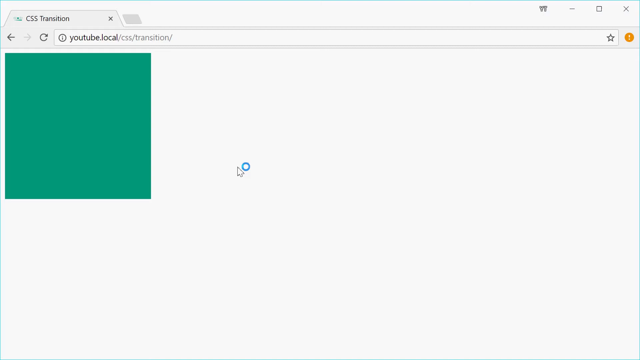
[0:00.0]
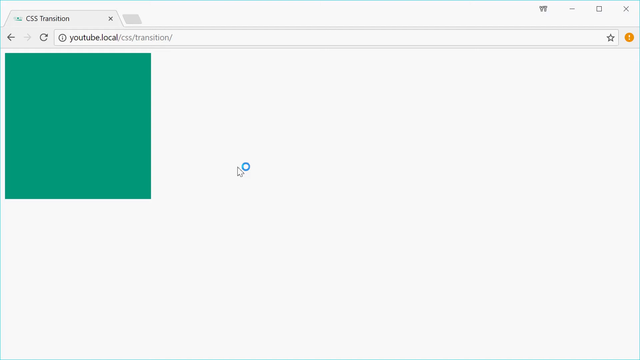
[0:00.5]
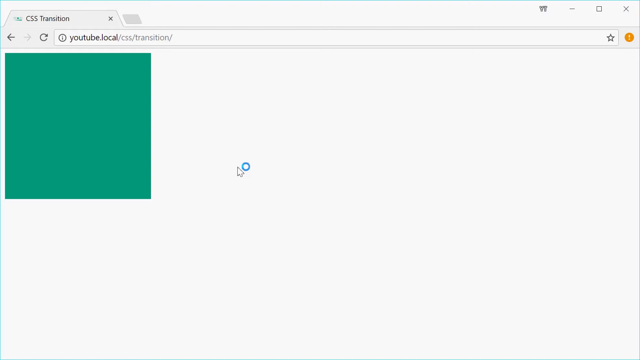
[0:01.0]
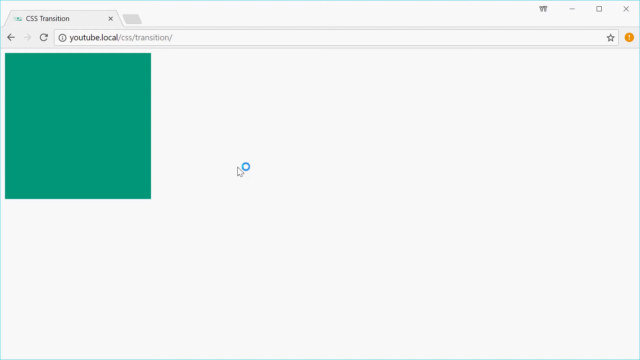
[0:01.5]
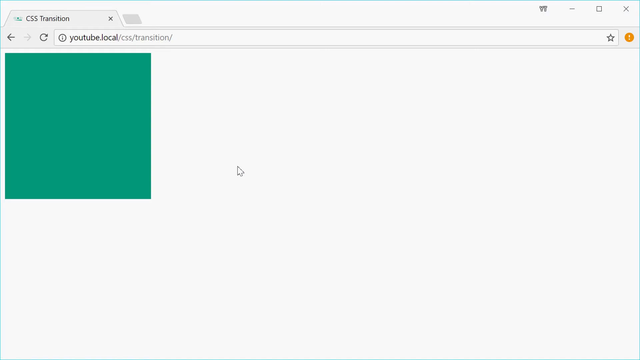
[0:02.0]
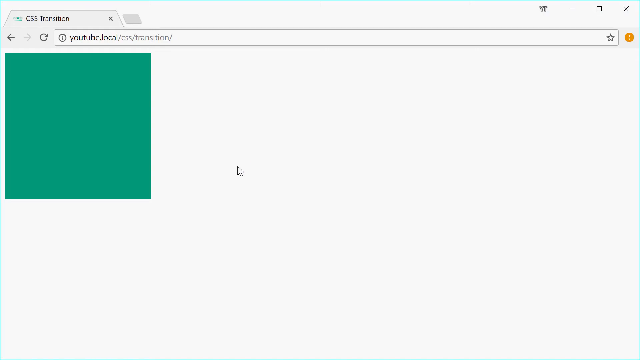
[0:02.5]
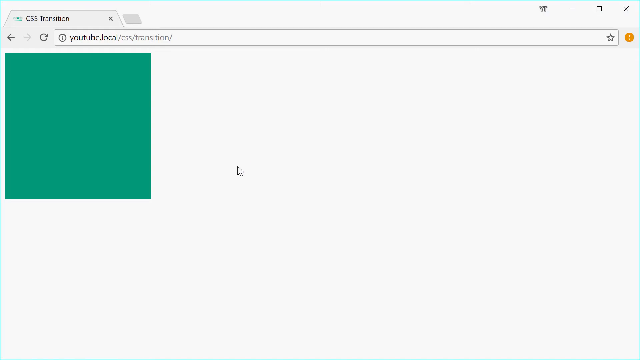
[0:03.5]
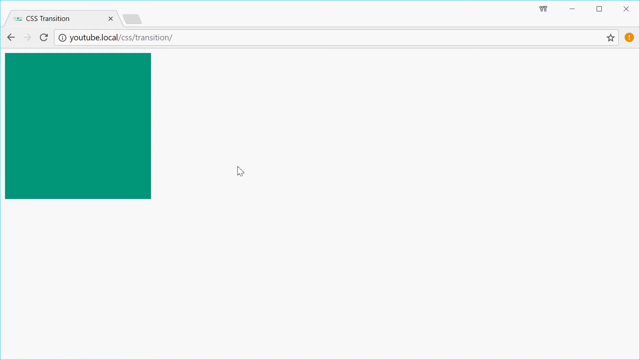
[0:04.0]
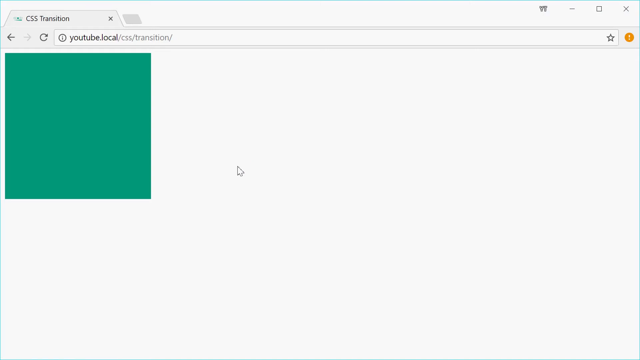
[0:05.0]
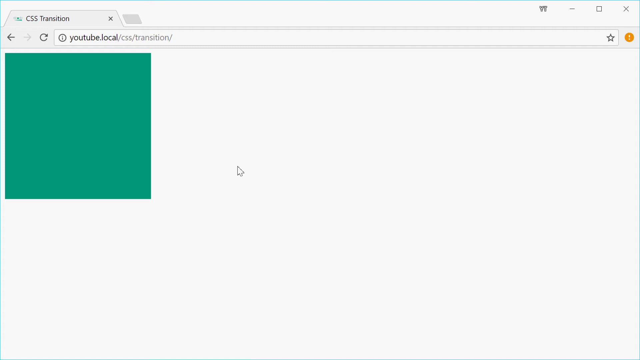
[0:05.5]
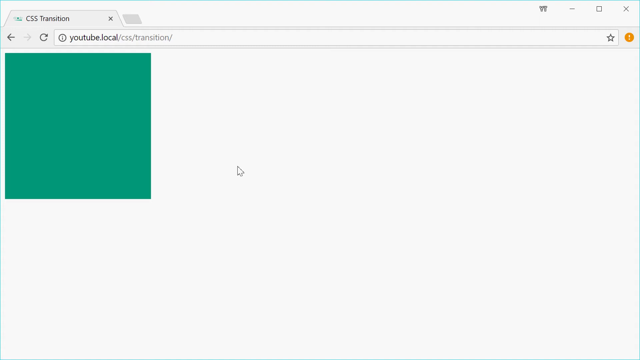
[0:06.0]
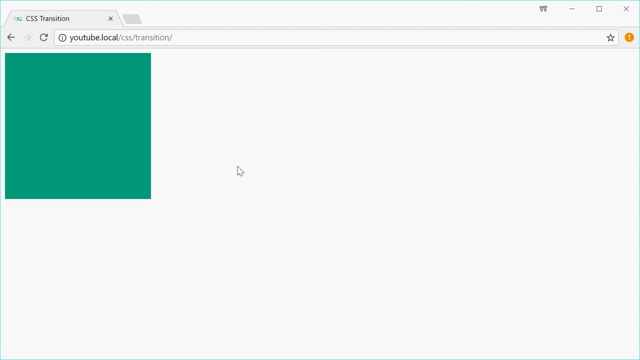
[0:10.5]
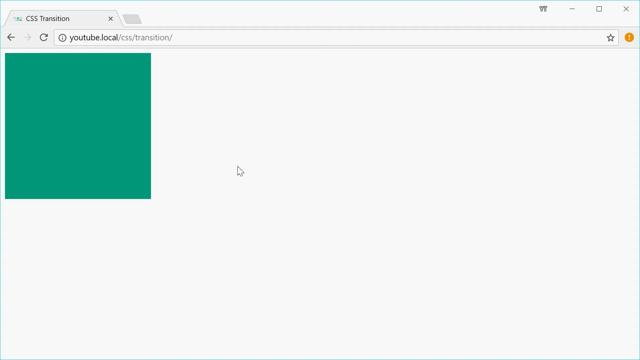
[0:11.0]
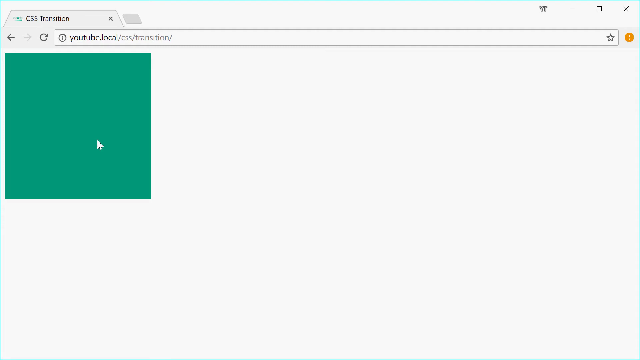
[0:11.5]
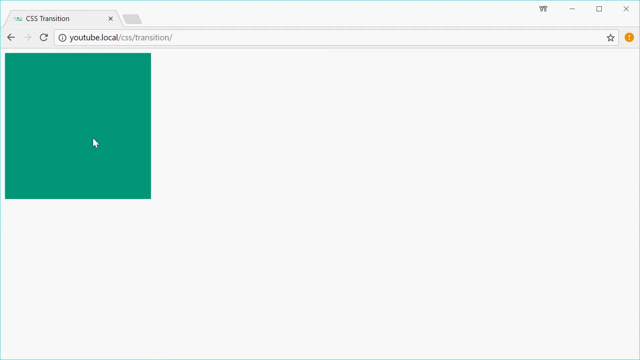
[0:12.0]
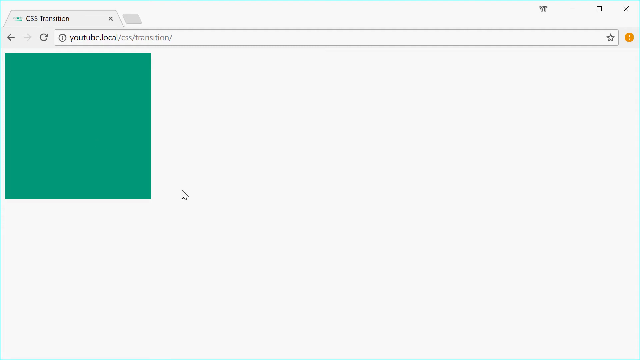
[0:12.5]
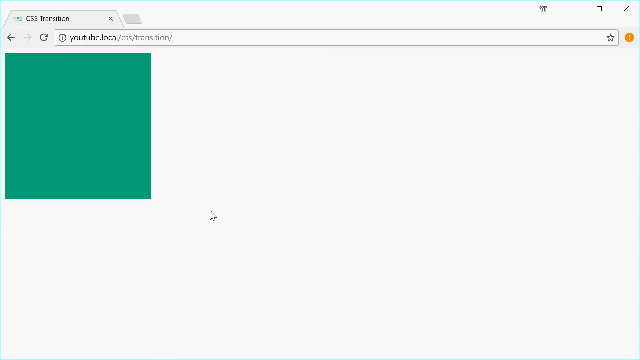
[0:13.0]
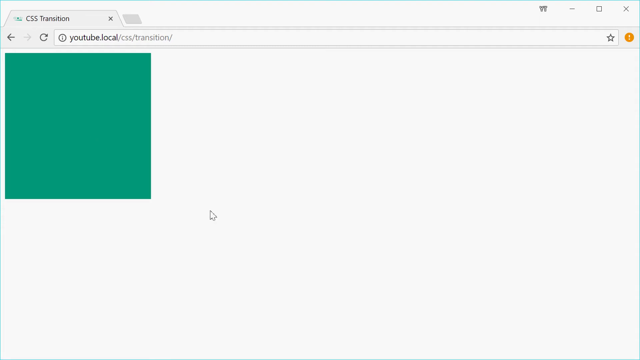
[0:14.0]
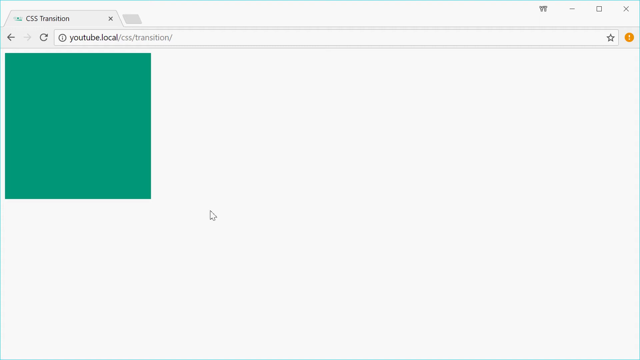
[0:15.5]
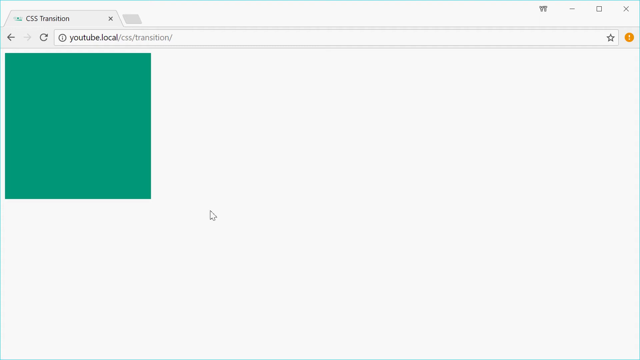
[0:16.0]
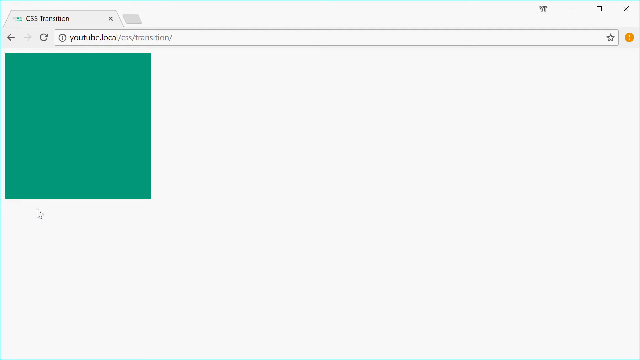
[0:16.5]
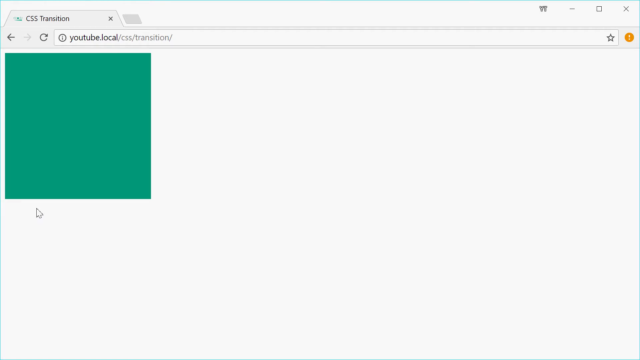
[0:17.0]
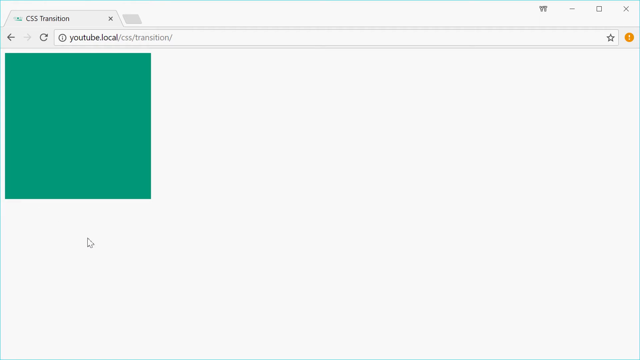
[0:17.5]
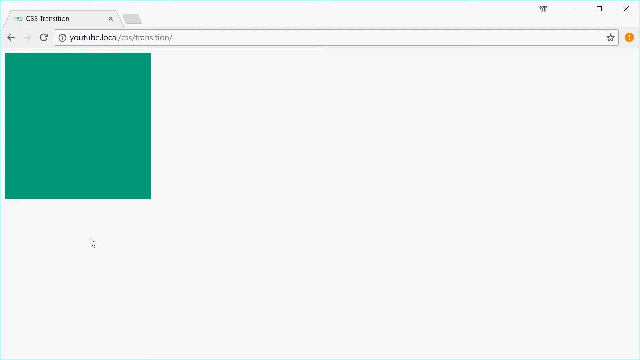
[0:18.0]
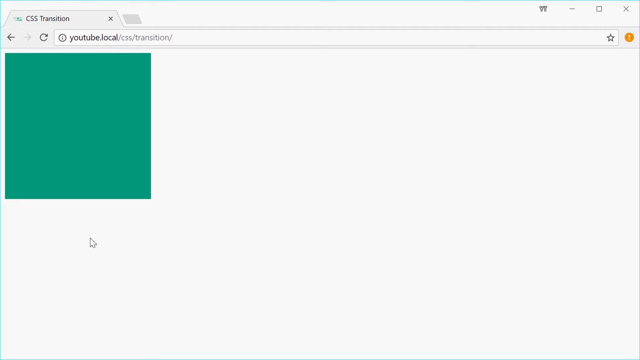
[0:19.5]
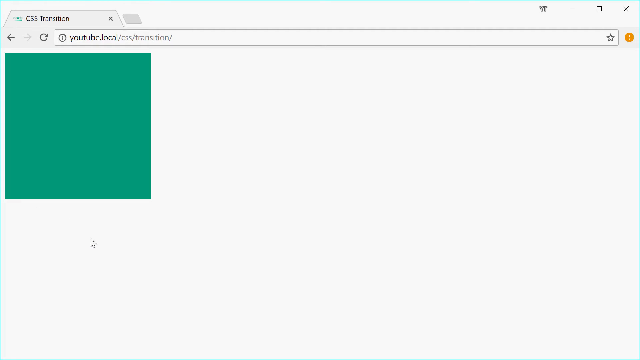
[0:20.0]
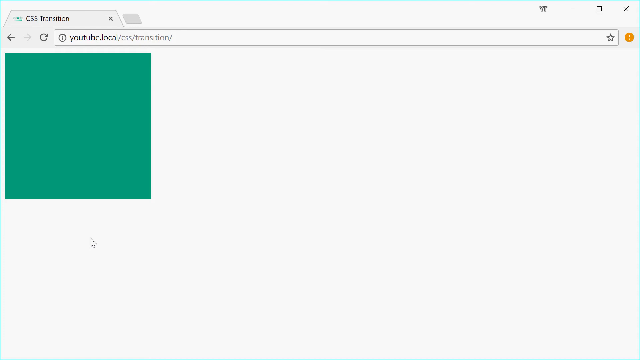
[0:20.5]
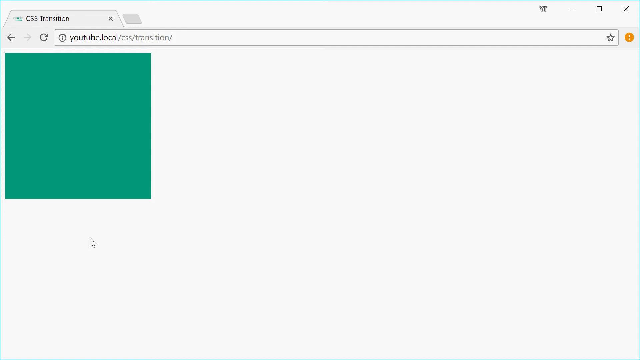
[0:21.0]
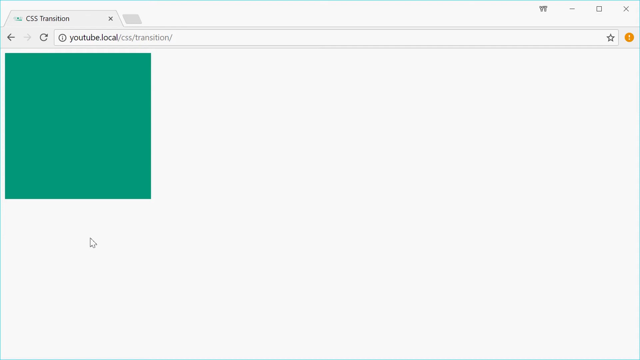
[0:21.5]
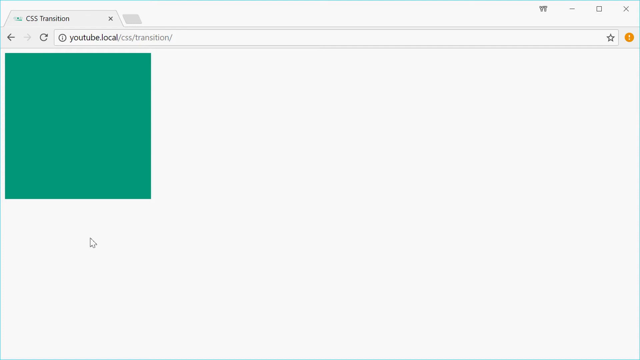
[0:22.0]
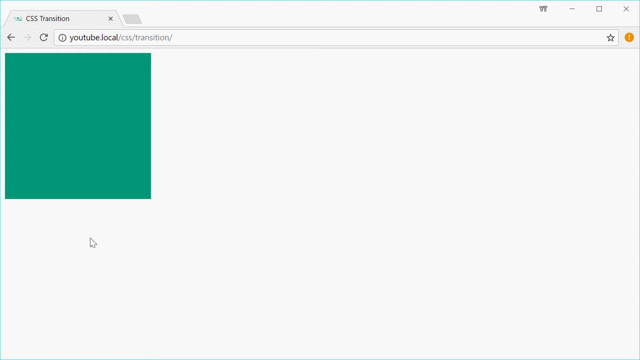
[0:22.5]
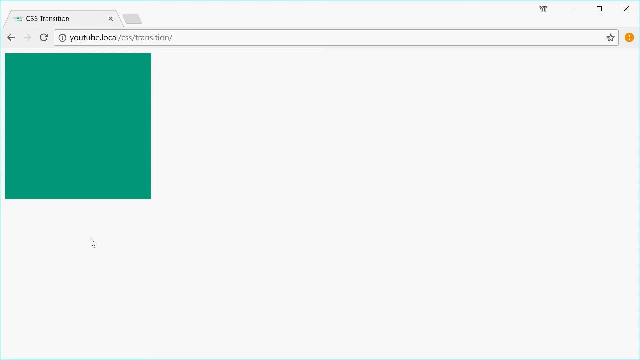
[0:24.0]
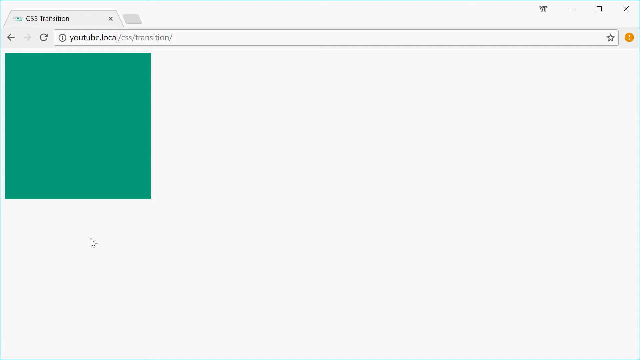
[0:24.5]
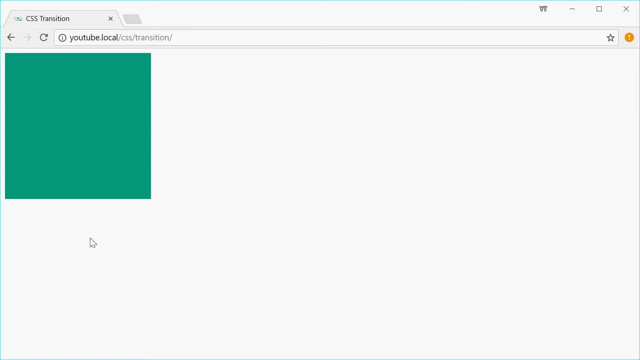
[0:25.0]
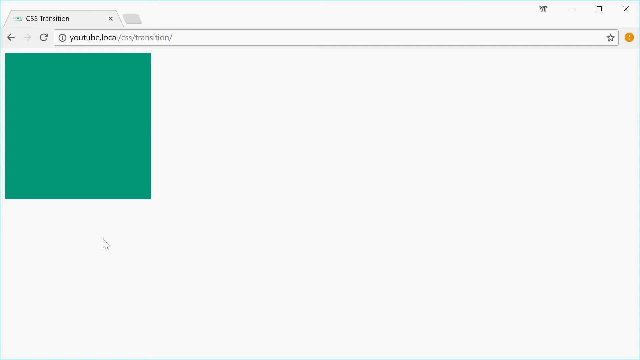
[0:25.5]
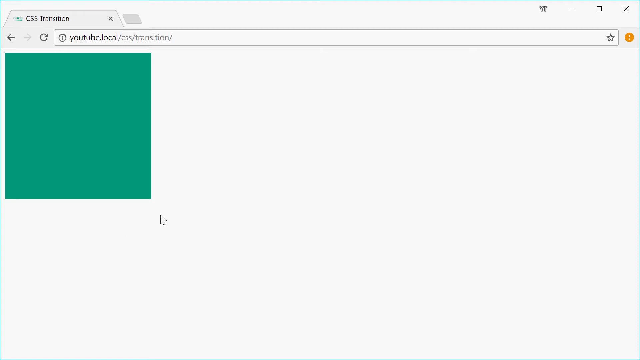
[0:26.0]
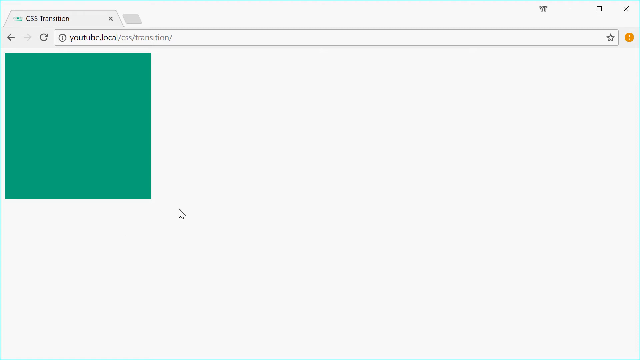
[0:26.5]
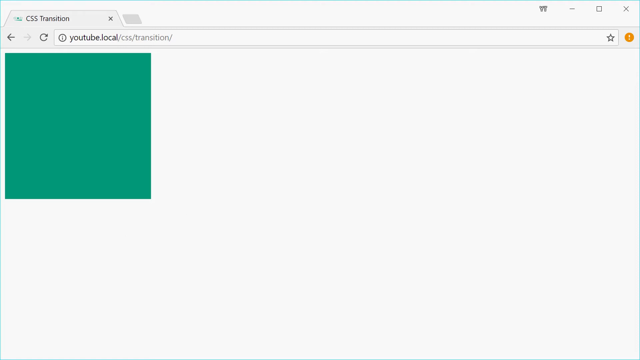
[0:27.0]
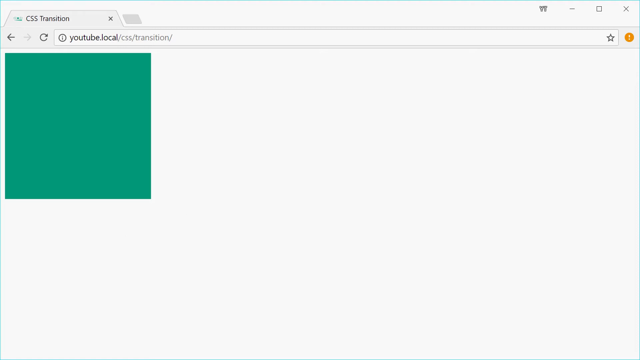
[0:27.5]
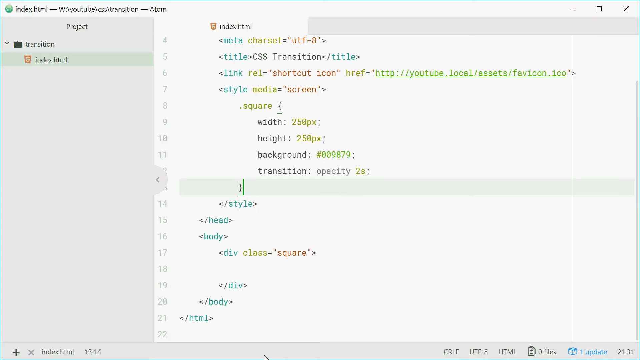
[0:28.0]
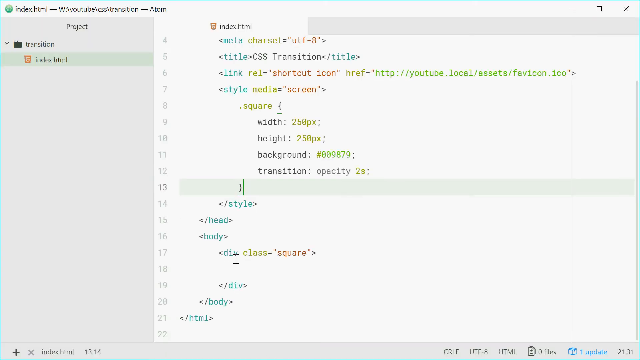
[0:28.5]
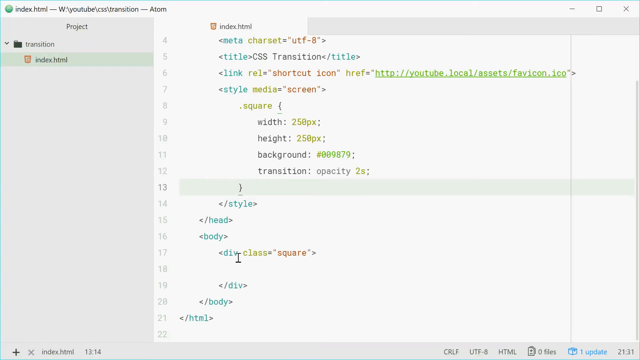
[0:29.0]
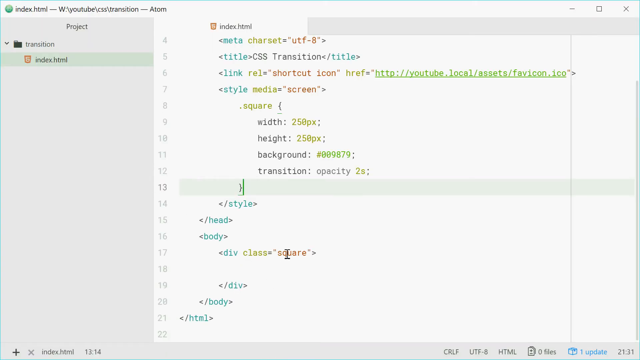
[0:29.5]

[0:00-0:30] A Google Chrome window is open on a CSS Transition tab showing a green box, alongside a YouTube local tab. A mouse pointer moves around the green box. A tab opens, apparently a coding tab, and something begins loading. Nothing else moves while the pointer keeps floating around the screen, and the shot ends on the loading screen.